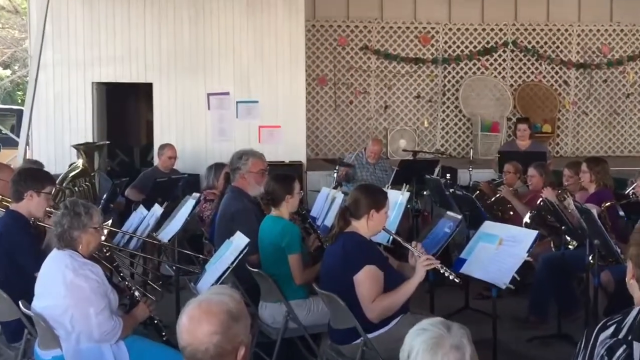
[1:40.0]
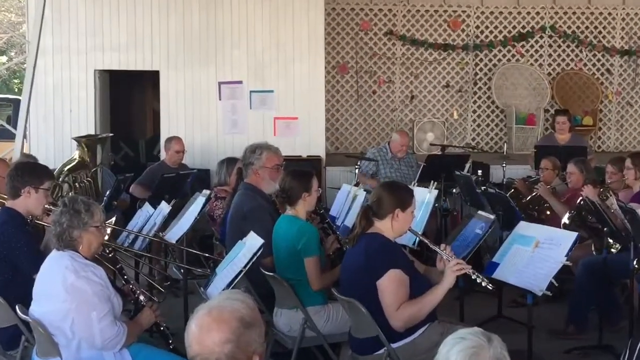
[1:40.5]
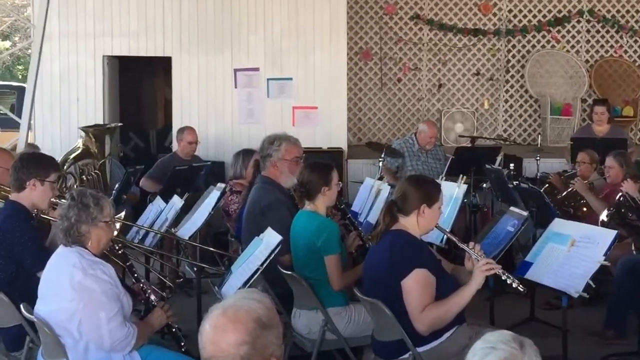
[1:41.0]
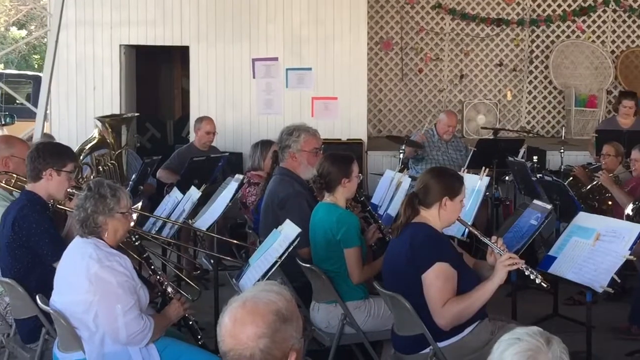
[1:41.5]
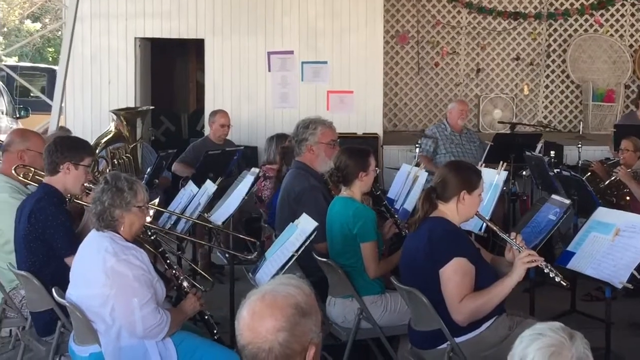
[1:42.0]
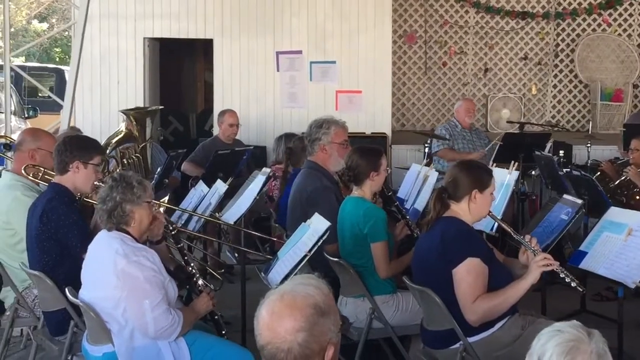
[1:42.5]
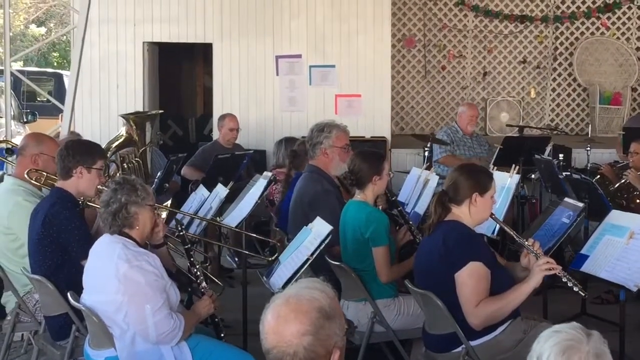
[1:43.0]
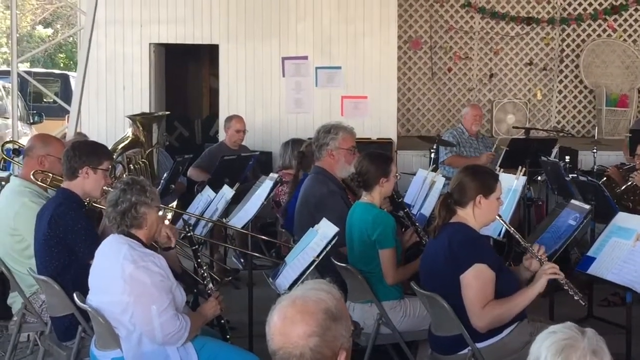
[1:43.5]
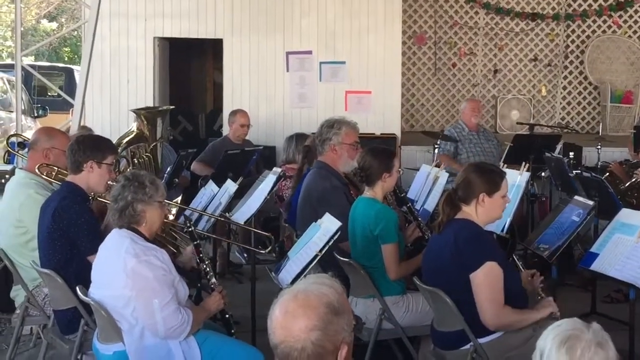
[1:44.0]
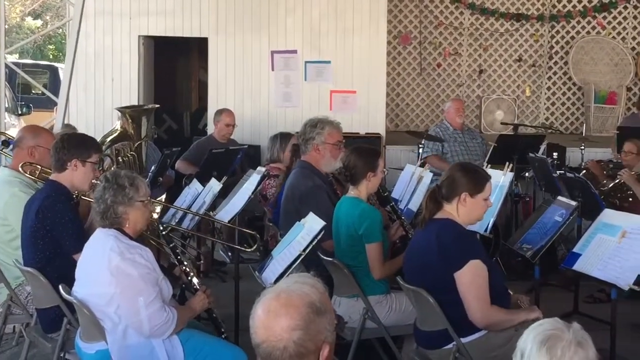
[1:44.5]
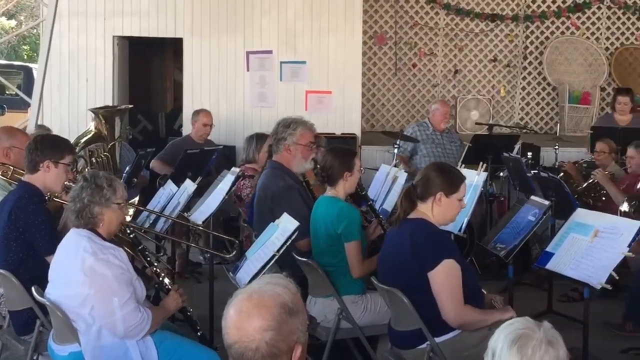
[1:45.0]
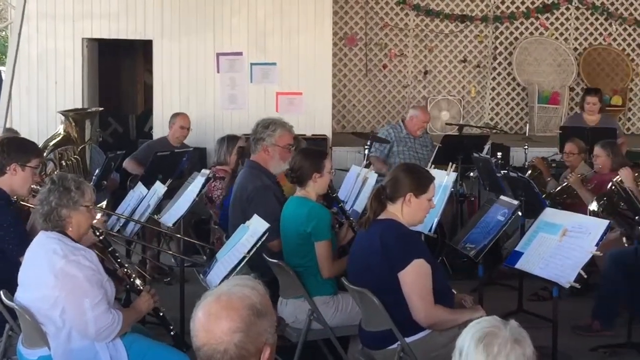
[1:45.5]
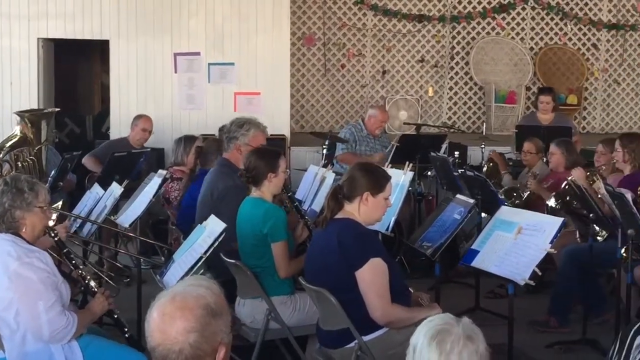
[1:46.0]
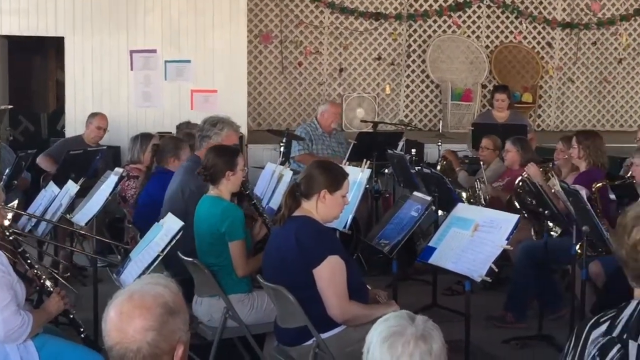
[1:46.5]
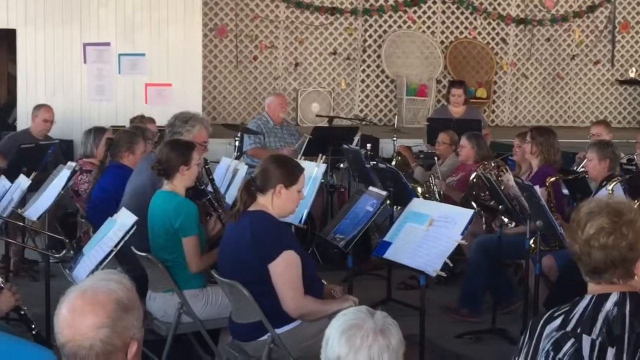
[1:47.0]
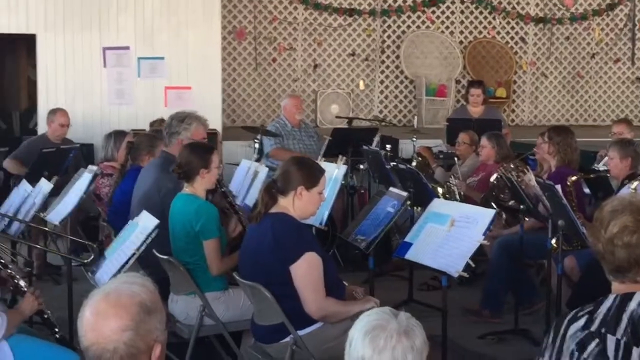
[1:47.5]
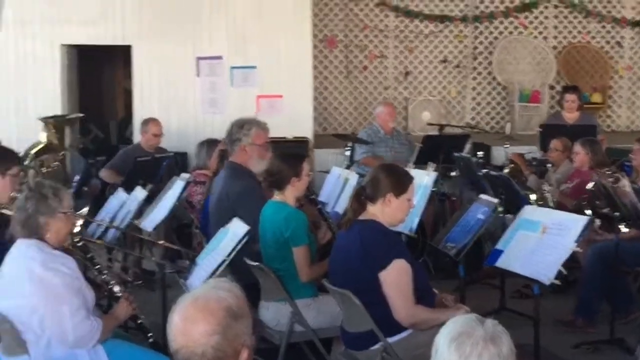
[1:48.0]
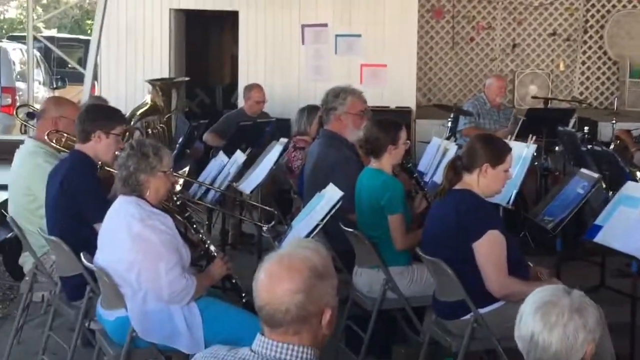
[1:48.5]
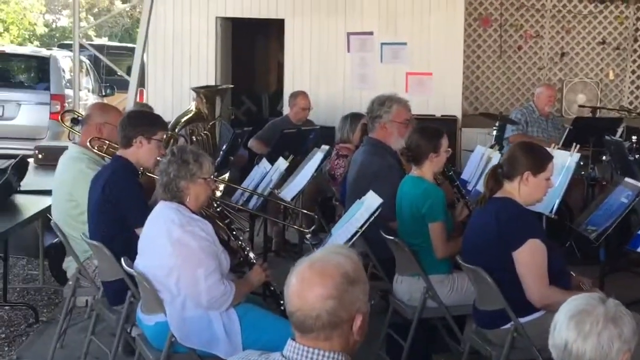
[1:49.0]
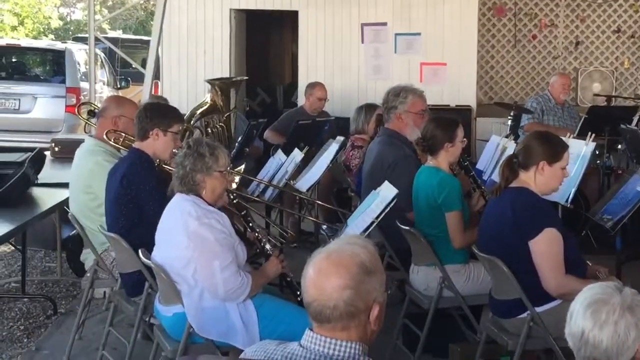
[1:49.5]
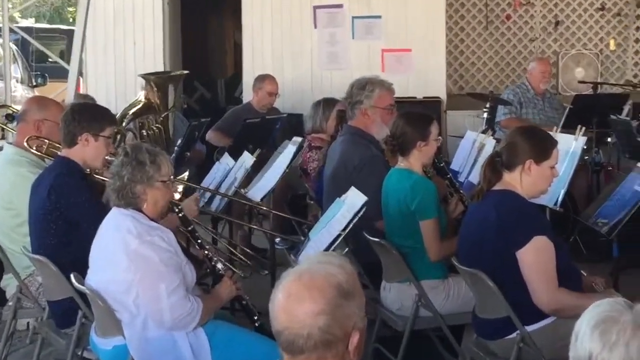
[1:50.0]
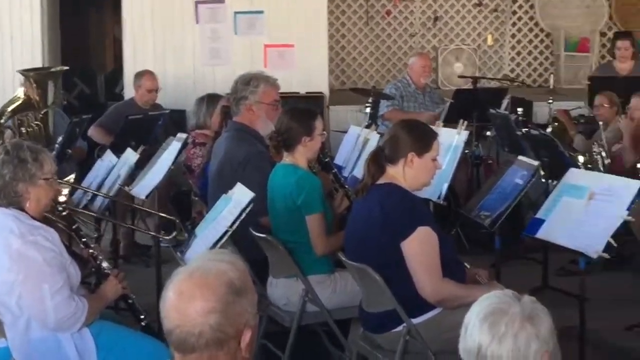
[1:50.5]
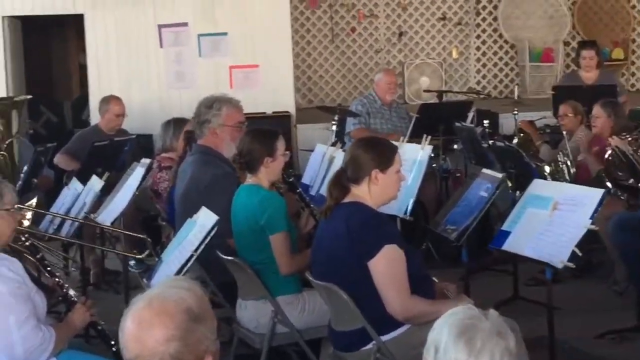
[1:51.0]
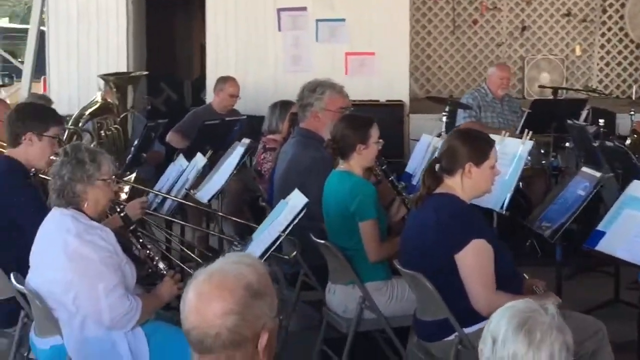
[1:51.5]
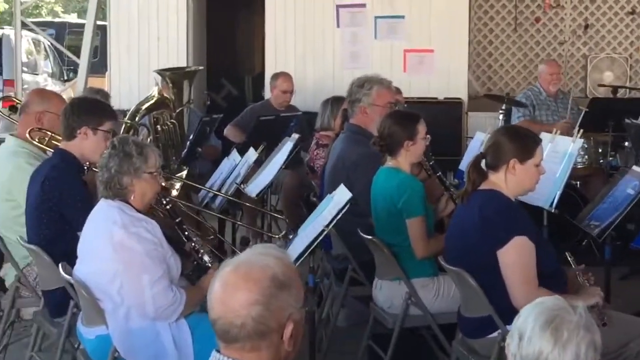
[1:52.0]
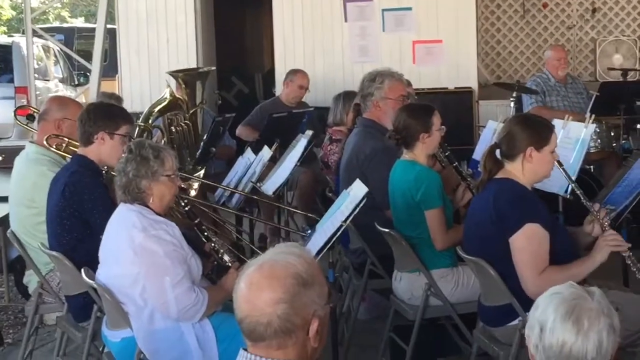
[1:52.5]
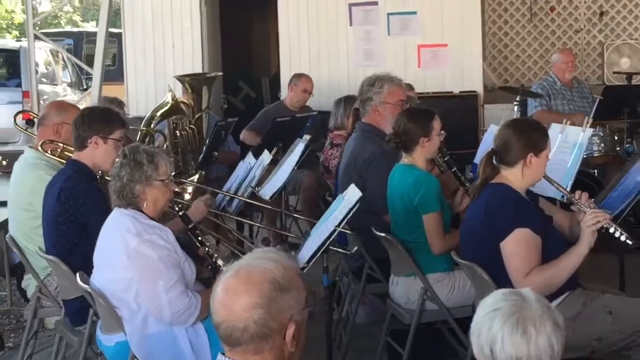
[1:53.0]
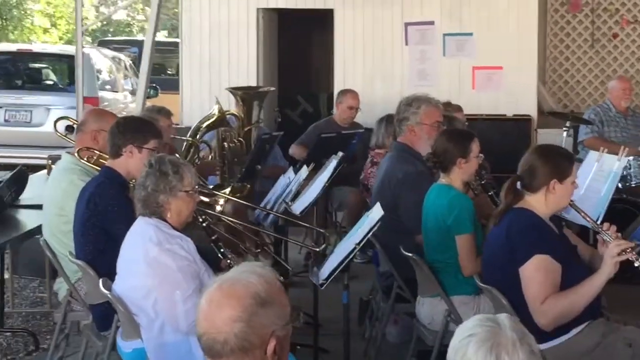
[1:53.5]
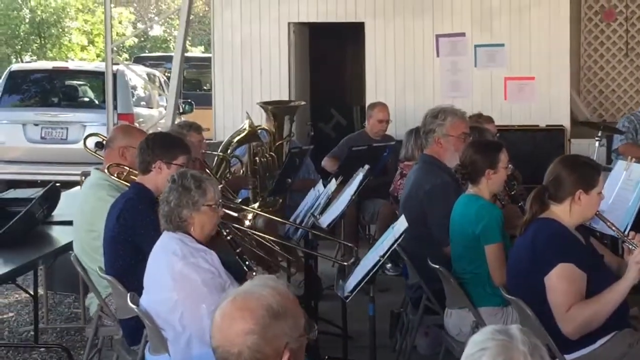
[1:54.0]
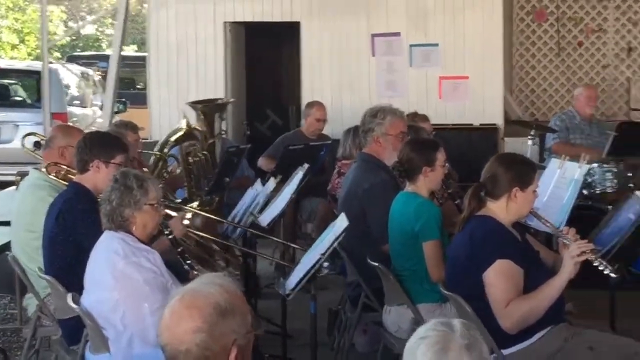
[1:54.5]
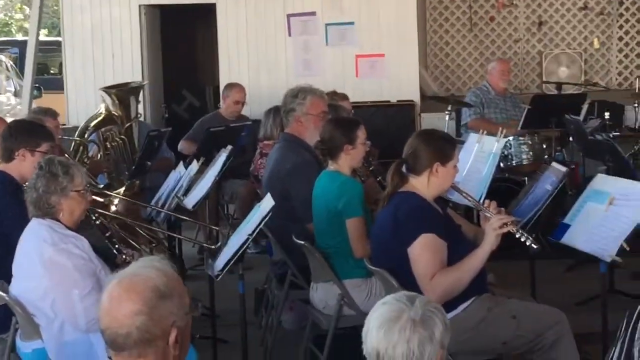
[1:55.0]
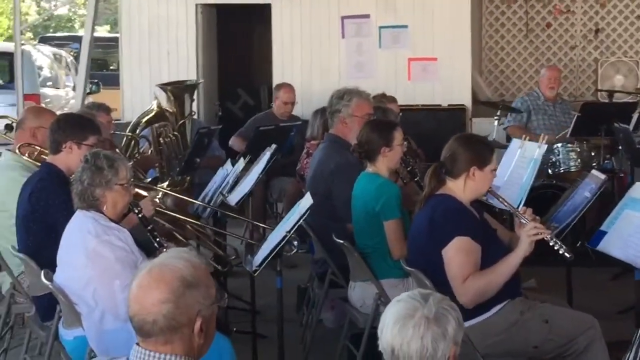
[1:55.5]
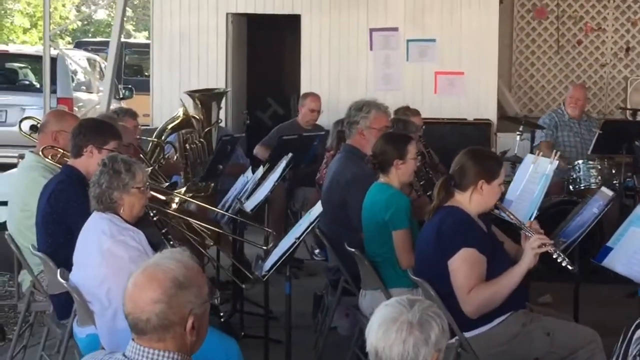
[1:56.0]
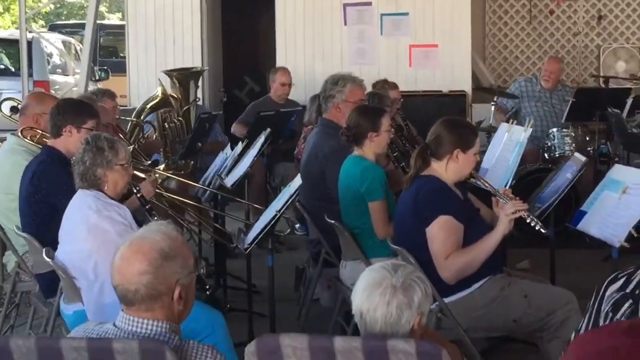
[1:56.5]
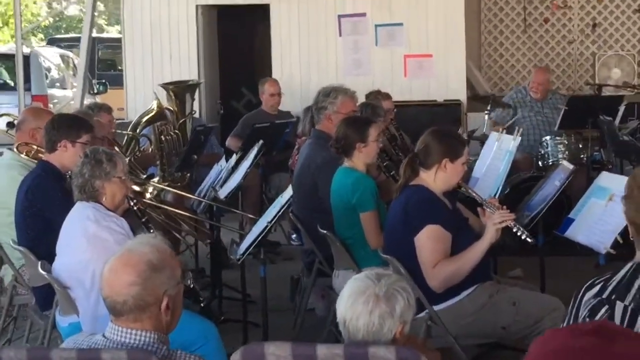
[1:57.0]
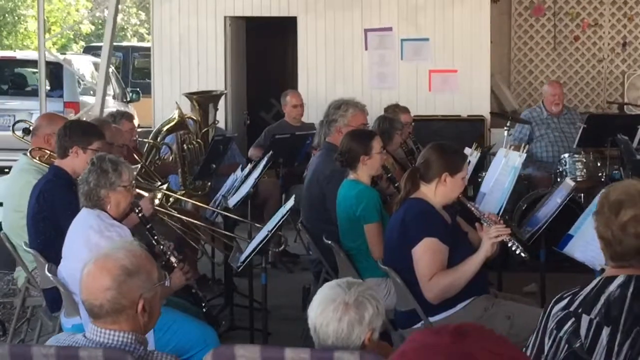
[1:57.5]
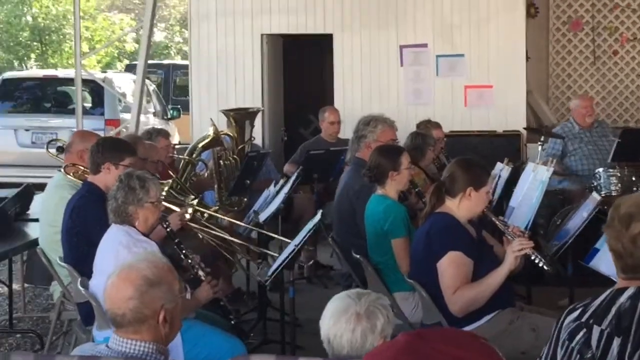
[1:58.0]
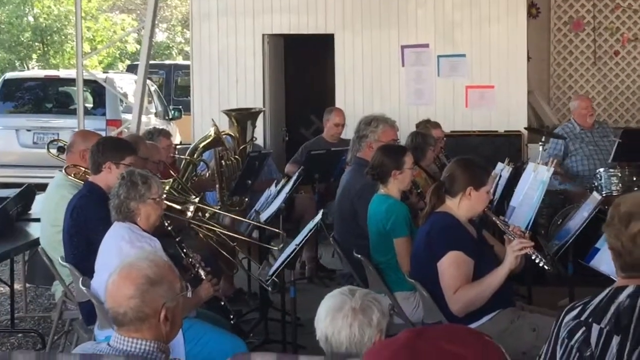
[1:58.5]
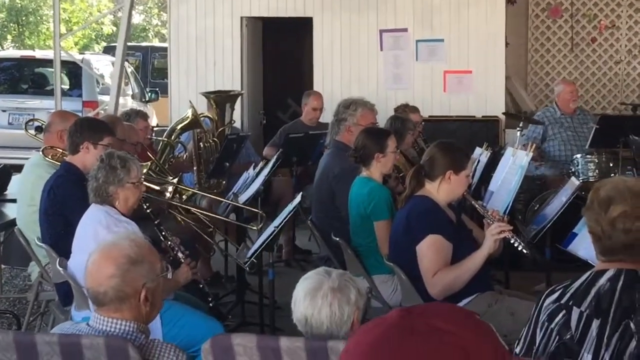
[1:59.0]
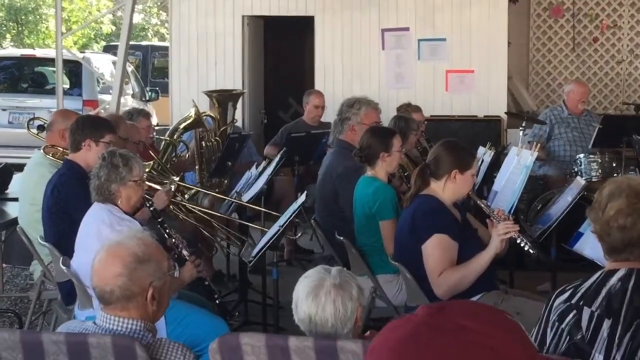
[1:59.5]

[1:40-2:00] The band continues to play, and every musician now seems to be involved in this part of the music. A woman holds a trombone to her lips, and the person to her left holds another trombone to his lips. A woman plays the clarinet just to the right, and a woman in a green shirt plays a flute or clarinet while looking at her music stand. The musicians are almost evenly split between men and women. What appears to be a window on the left of the picture shows green leaves on a tree, but not much else. The drummer bangs the cymbals once and then returns to the drums, playing an irregular beat. The trombonist on the left plays energetically, moving the slide away and toward him in less than a second.